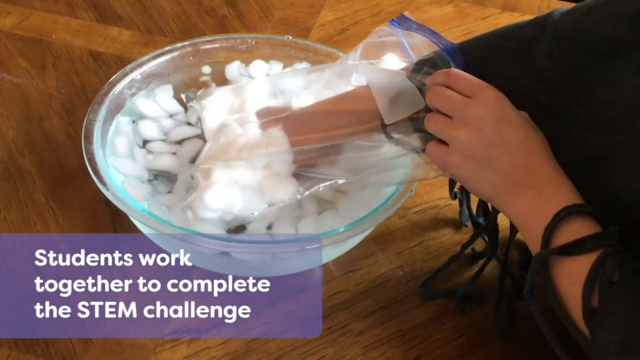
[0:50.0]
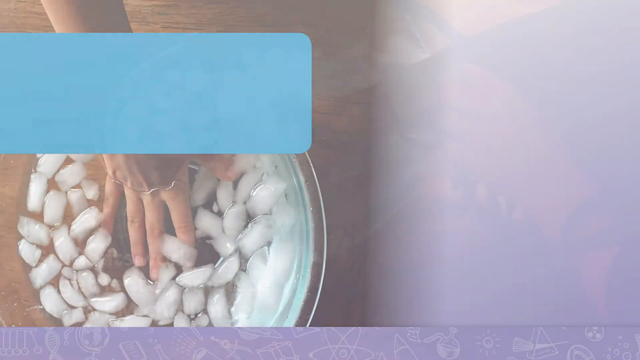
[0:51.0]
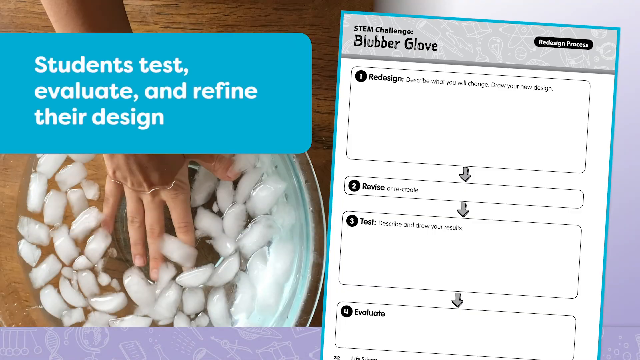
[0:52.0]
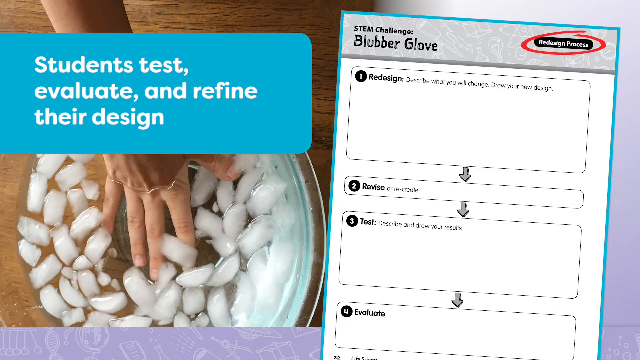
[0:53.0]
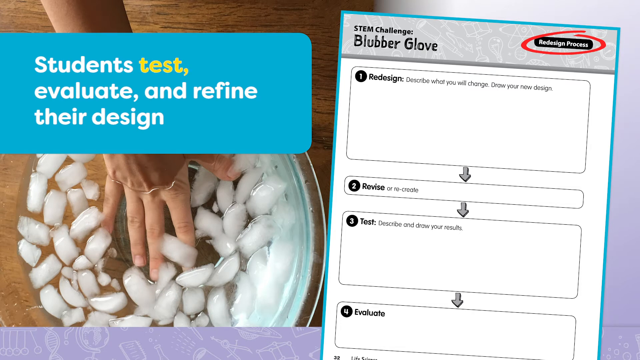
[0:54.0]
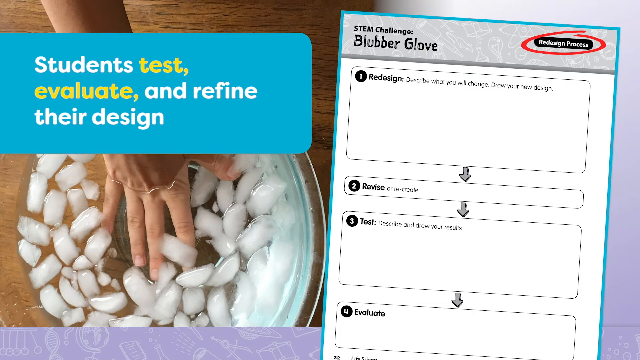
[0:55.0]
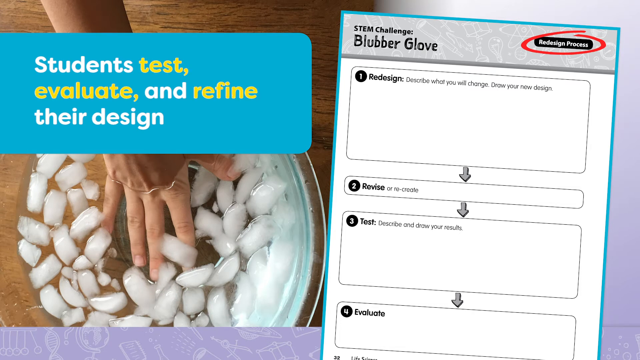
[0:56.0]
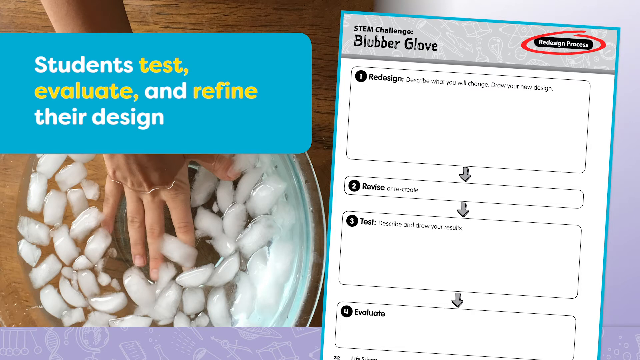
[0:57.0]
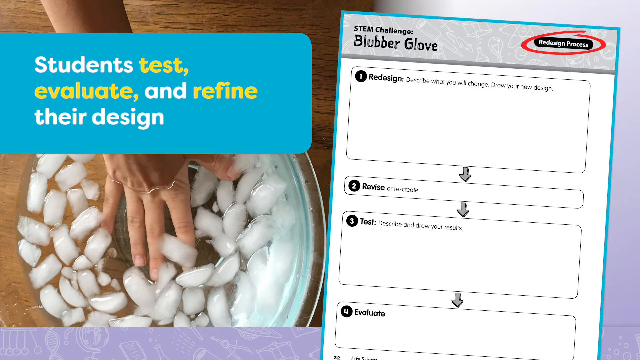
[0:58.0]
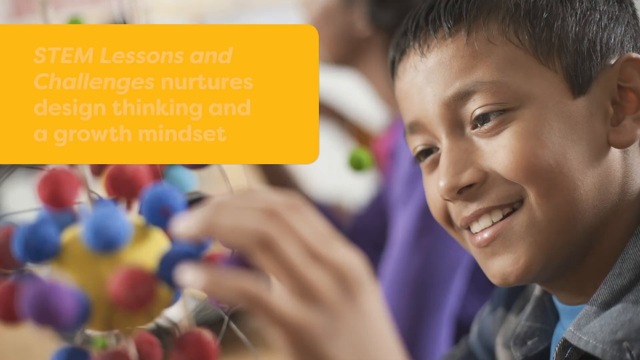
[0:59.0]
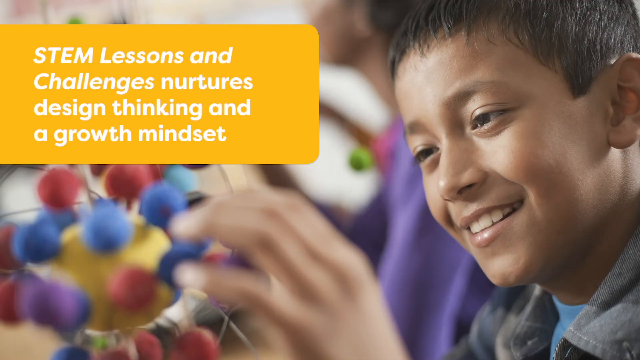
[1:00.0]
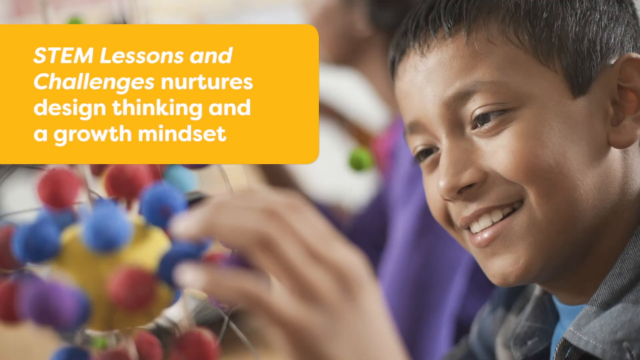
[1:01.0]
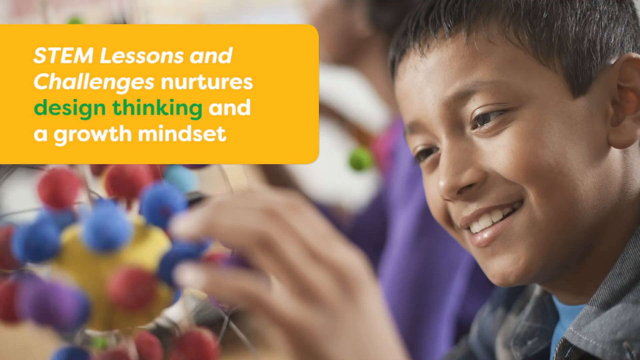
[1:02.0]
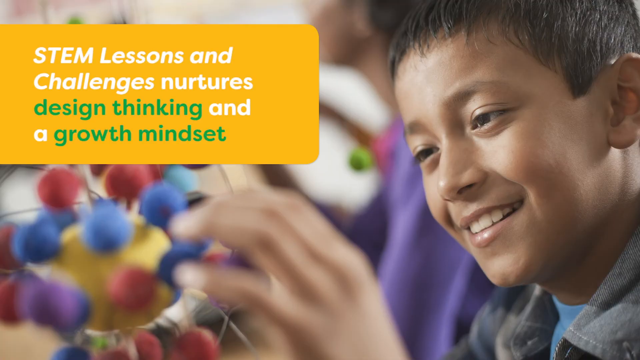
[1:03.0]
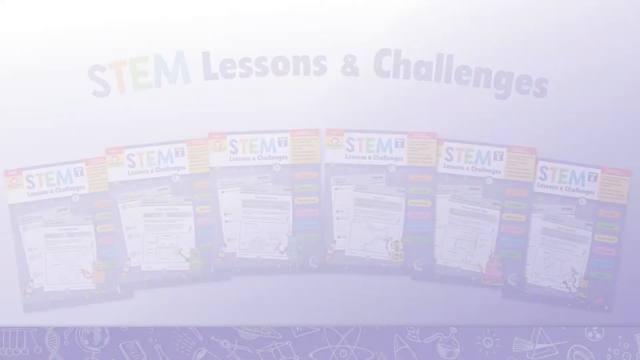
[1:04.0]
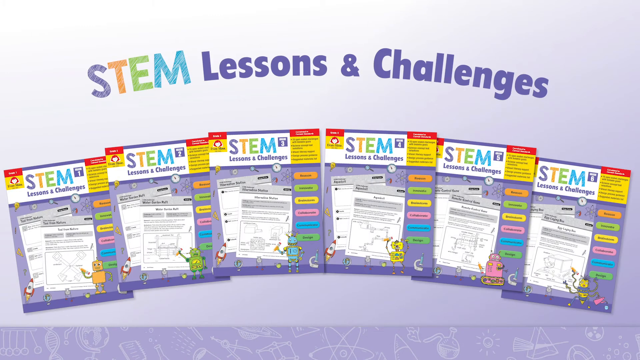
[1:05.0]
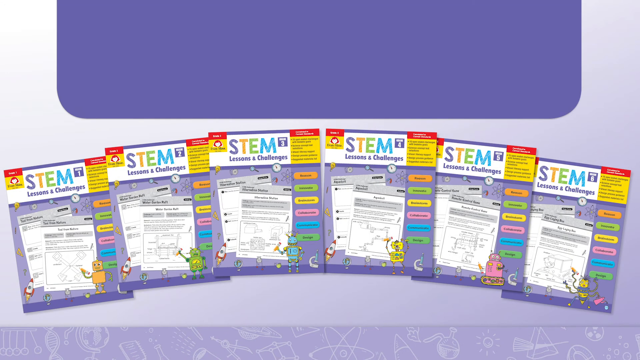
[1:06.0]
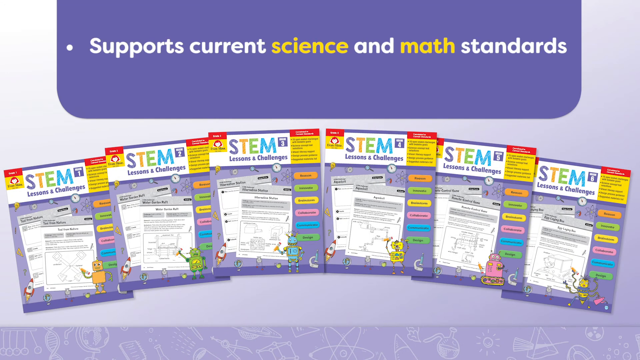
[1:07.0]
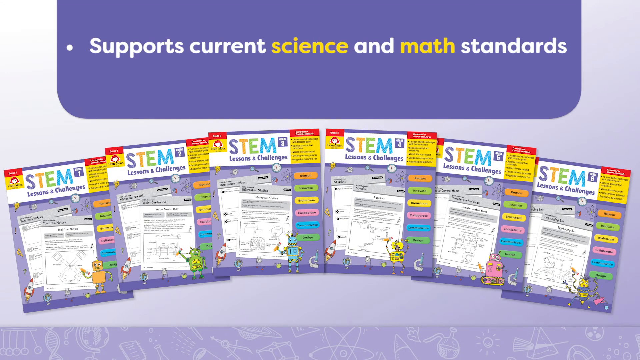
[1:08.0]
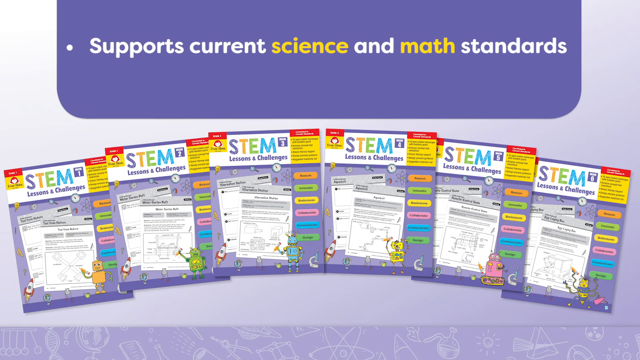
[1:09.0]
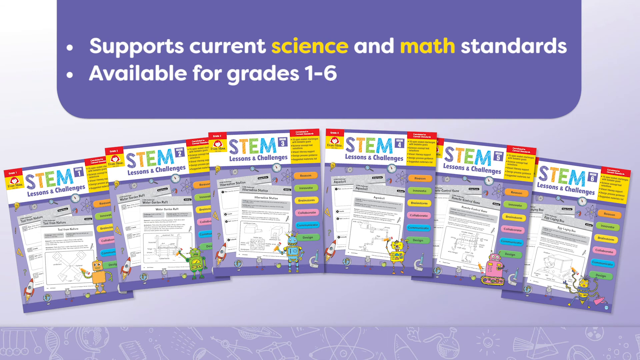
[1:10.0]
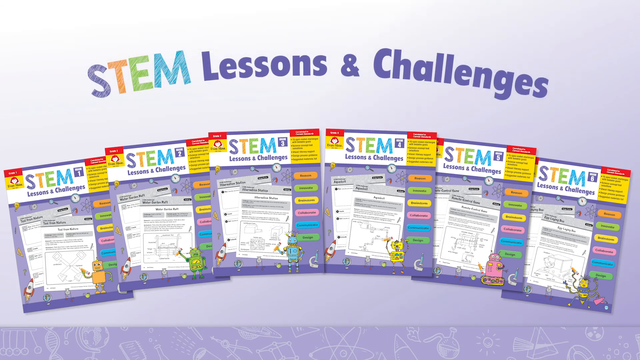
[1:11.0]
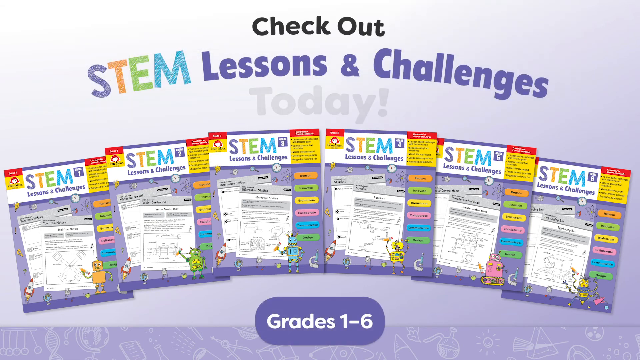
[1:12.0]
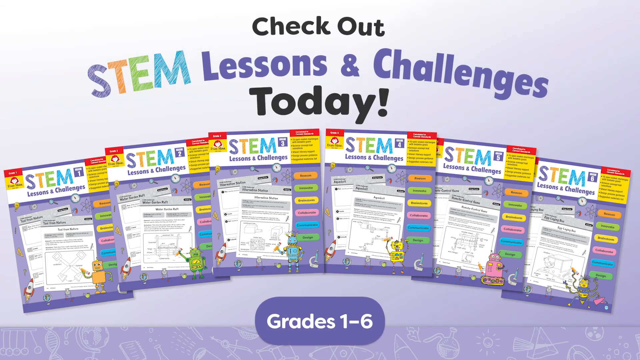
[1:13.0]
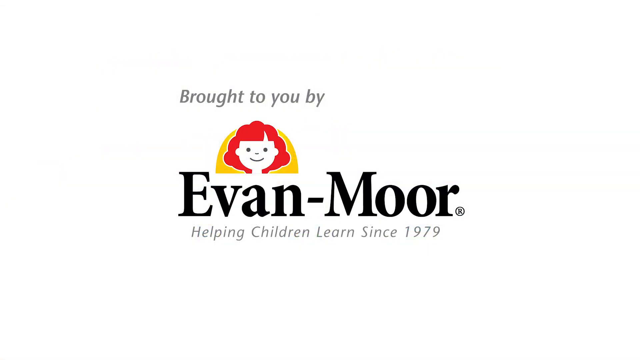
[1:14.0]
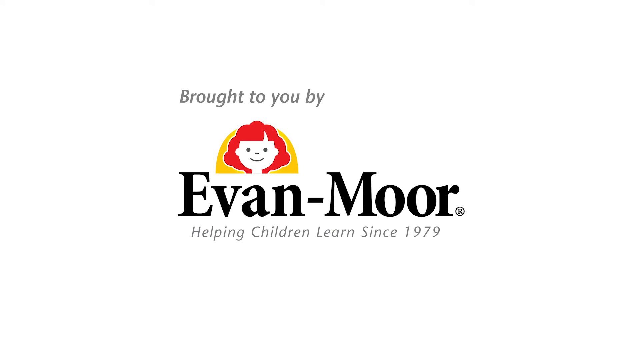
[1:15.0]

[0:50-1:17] A book is shown for grade 1 to 6, with text about STEM learning and challenges, followed by "15 STEM challenges," "low prep lessons," and "guide students through the entire STEM process." The next page says every unit provides a suggested material list. Another page has text about a science text to build background, with a white bear. Text then reads "real-world example," with examples written out and highlighted. A STEM challenge page shows a cartoon holding a yellow crayon. Finally, a design process worksheet shows plan, create and test, apparently the instructions for taking up the challenges.